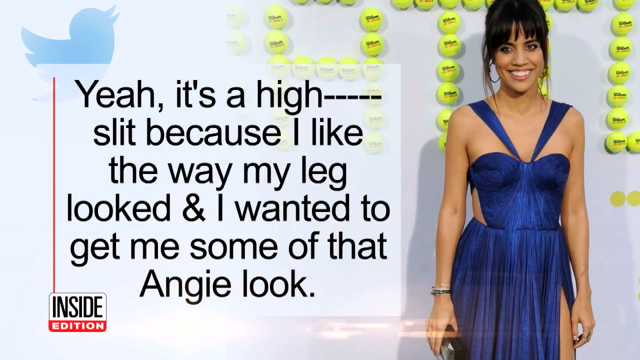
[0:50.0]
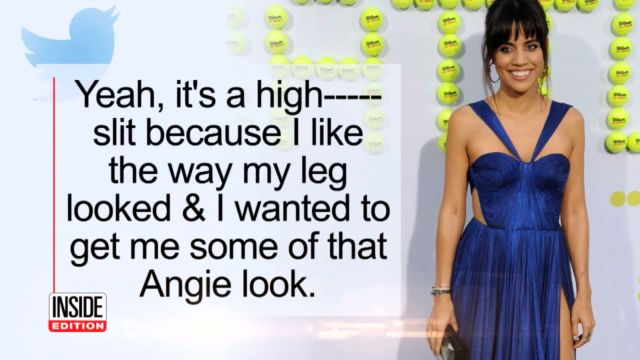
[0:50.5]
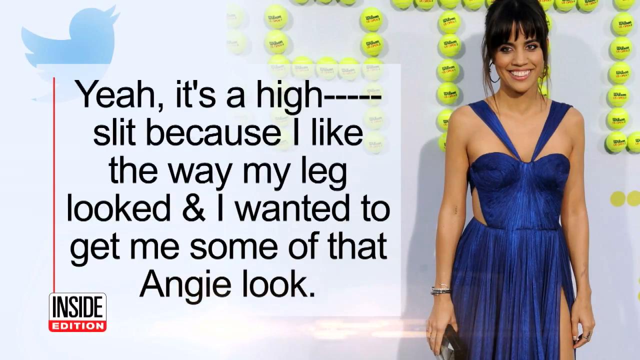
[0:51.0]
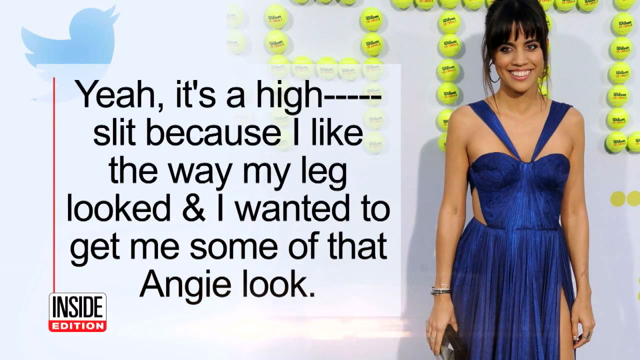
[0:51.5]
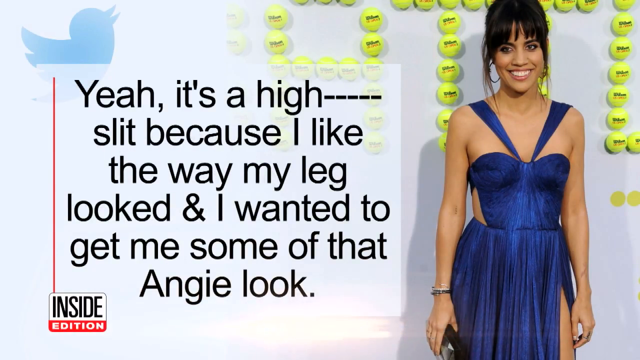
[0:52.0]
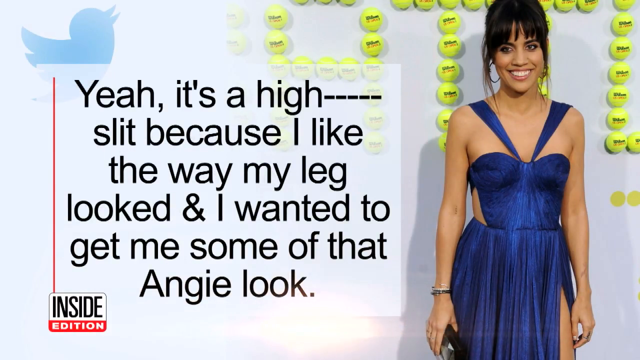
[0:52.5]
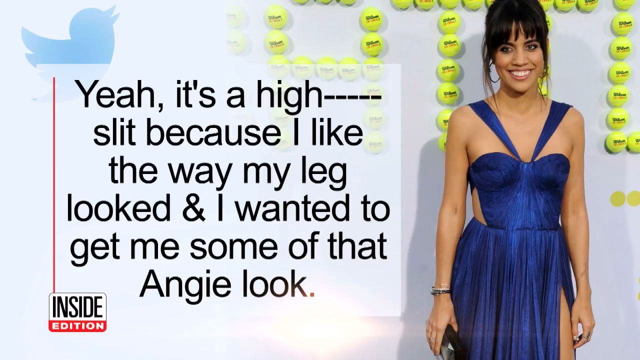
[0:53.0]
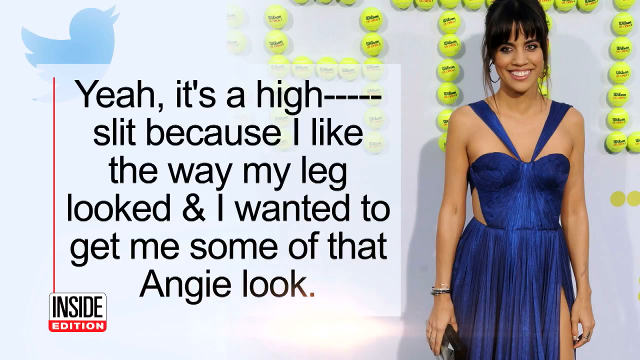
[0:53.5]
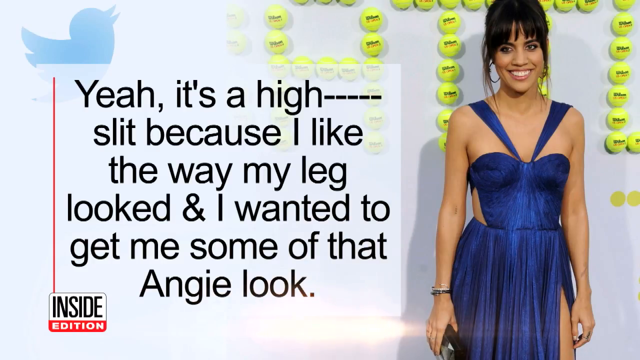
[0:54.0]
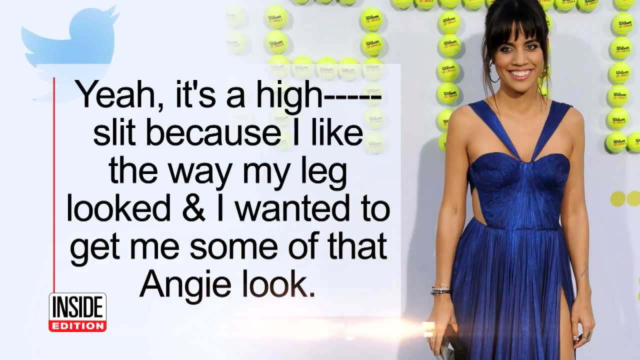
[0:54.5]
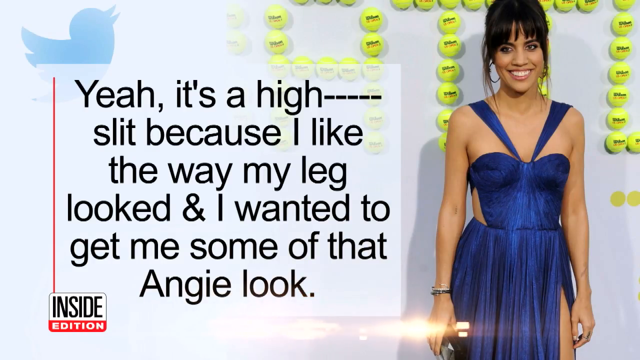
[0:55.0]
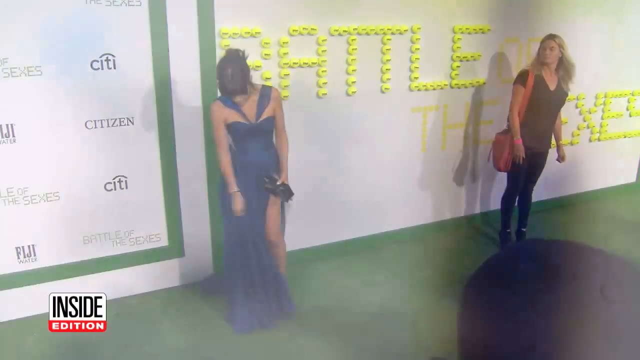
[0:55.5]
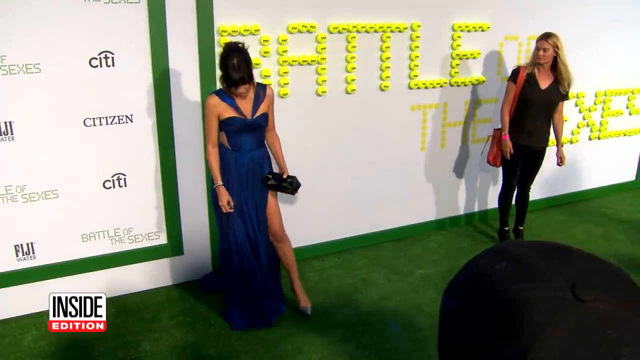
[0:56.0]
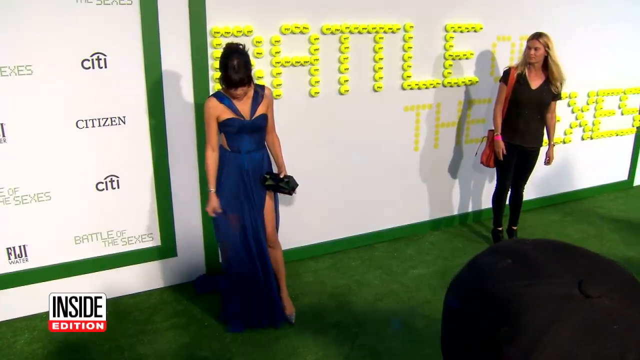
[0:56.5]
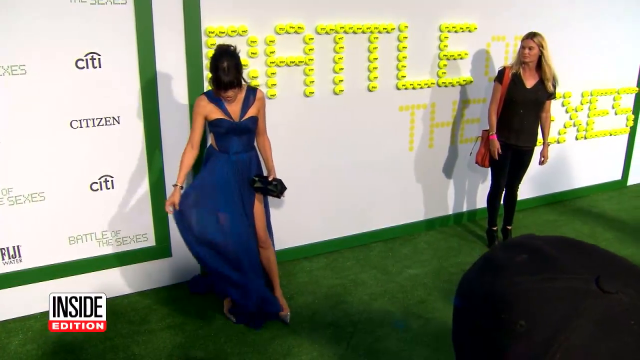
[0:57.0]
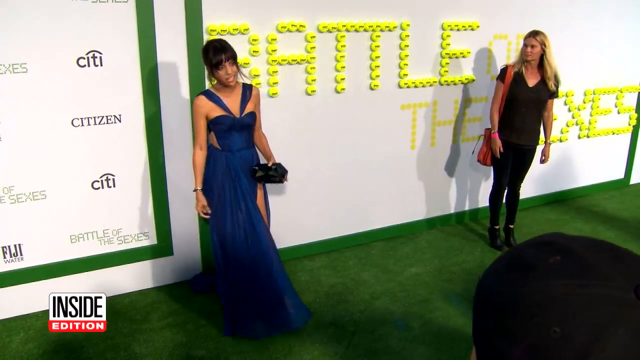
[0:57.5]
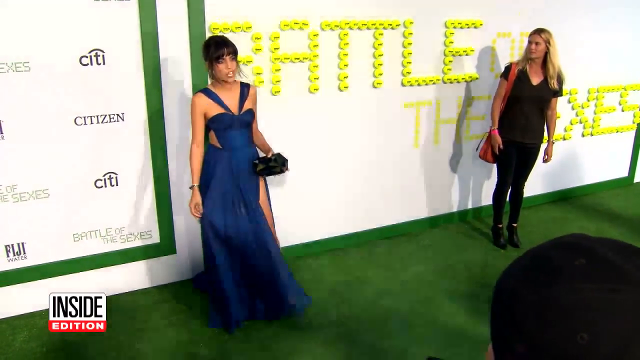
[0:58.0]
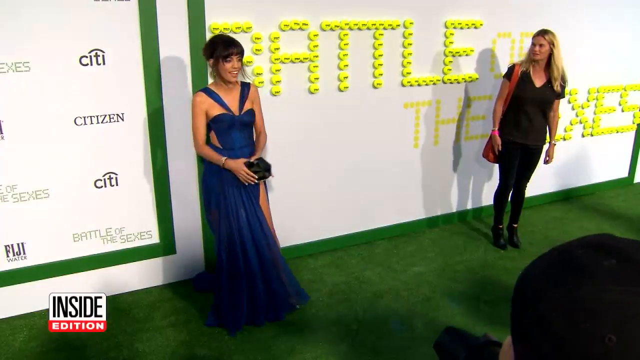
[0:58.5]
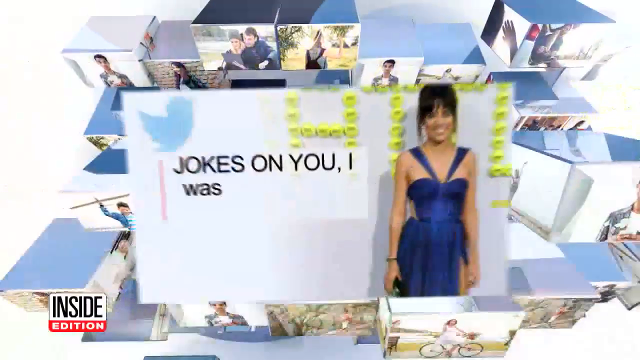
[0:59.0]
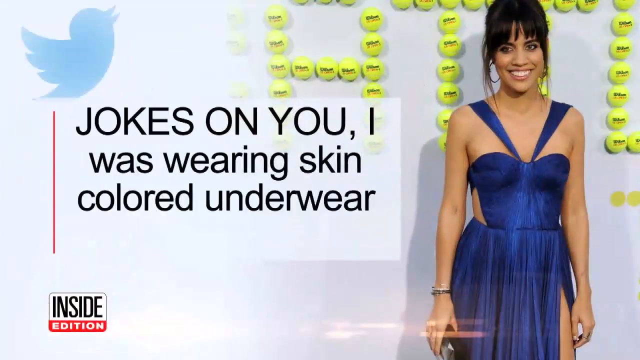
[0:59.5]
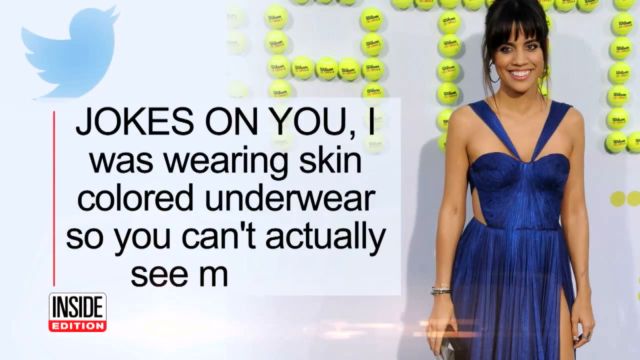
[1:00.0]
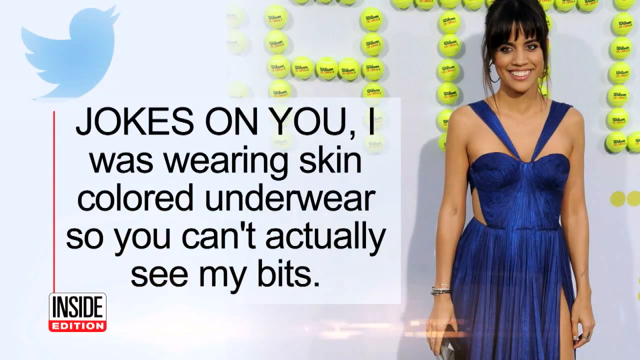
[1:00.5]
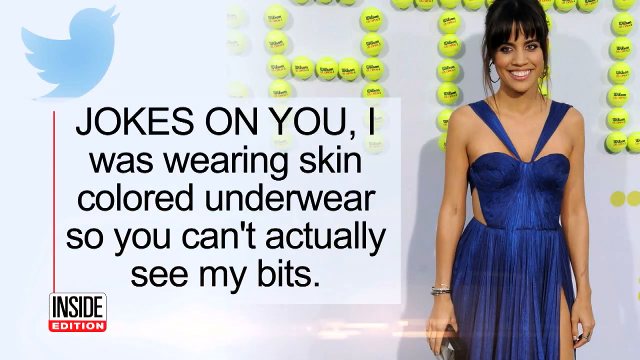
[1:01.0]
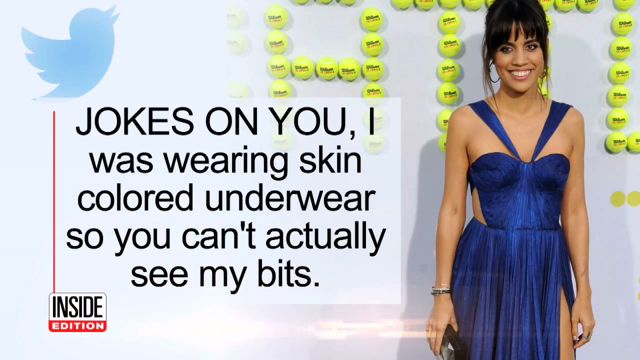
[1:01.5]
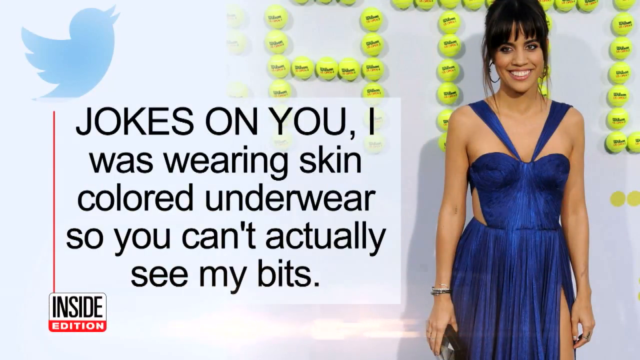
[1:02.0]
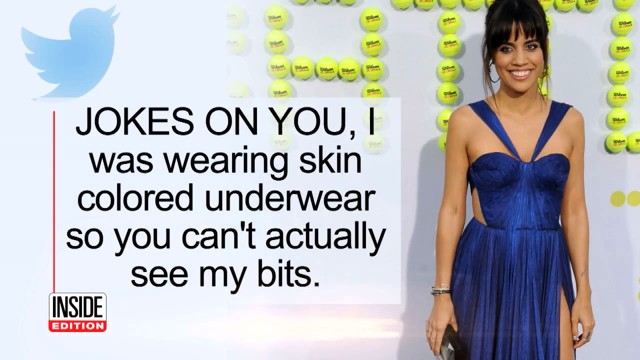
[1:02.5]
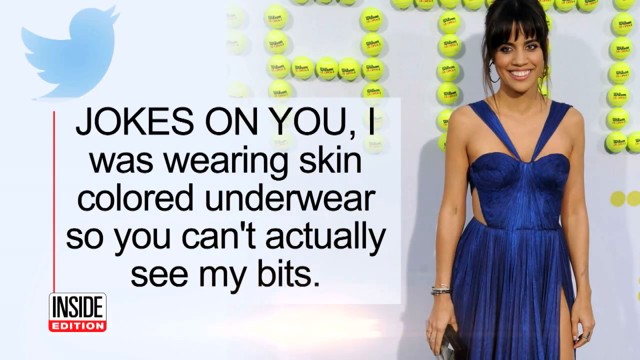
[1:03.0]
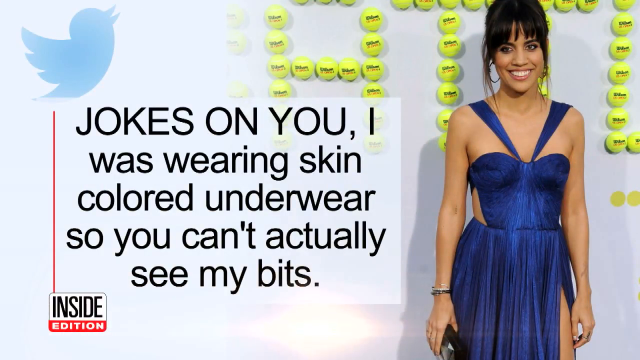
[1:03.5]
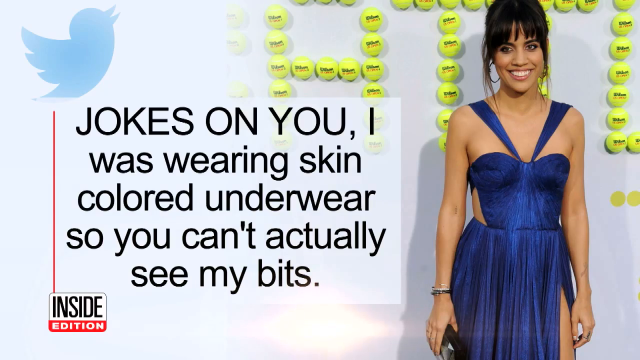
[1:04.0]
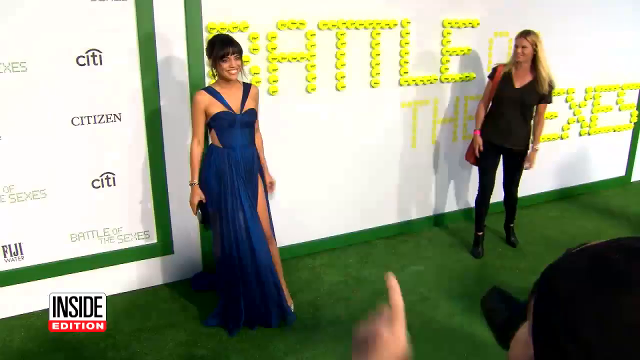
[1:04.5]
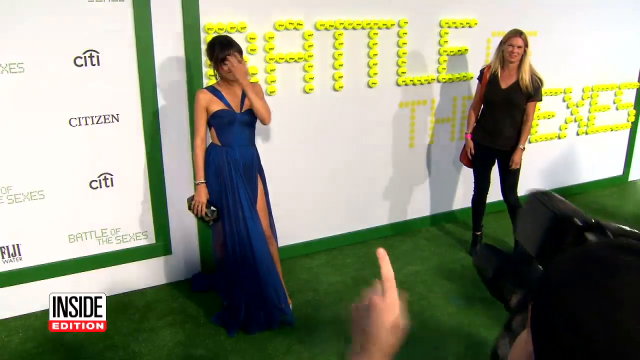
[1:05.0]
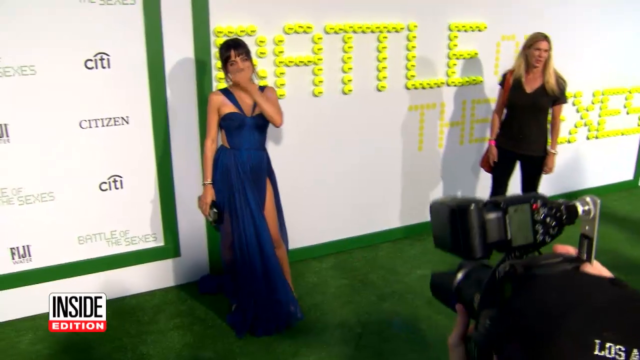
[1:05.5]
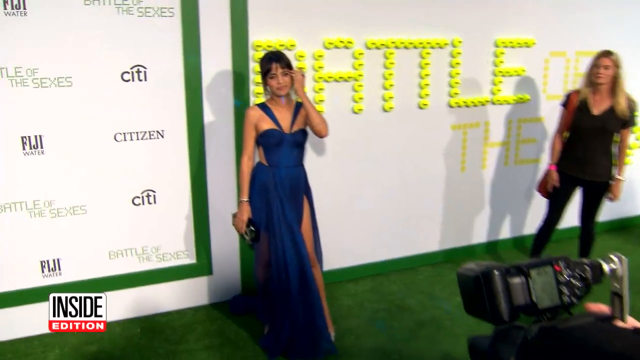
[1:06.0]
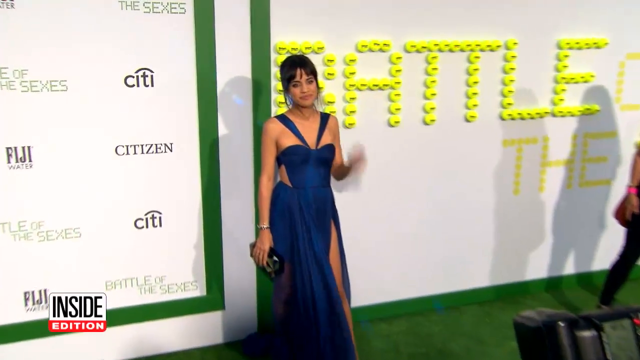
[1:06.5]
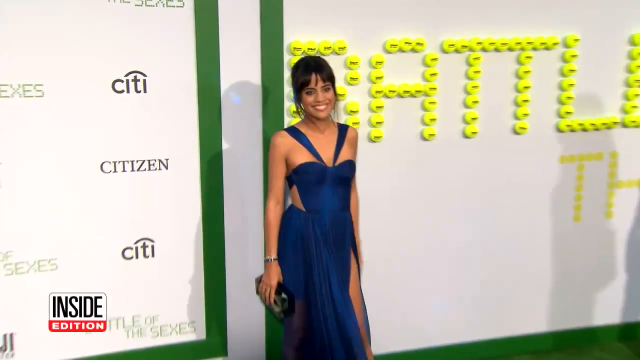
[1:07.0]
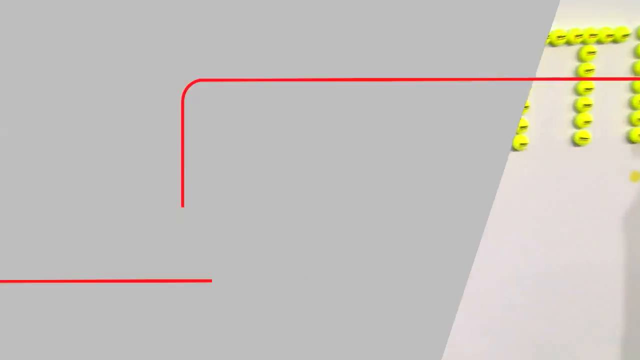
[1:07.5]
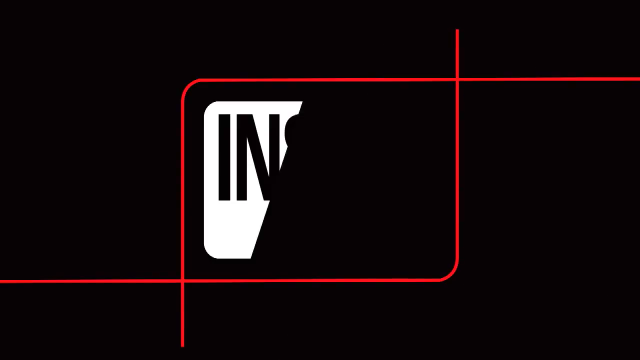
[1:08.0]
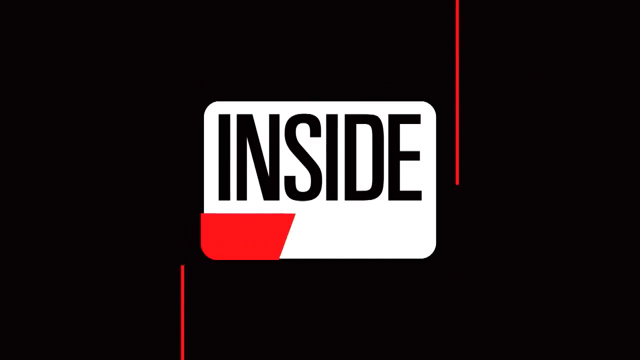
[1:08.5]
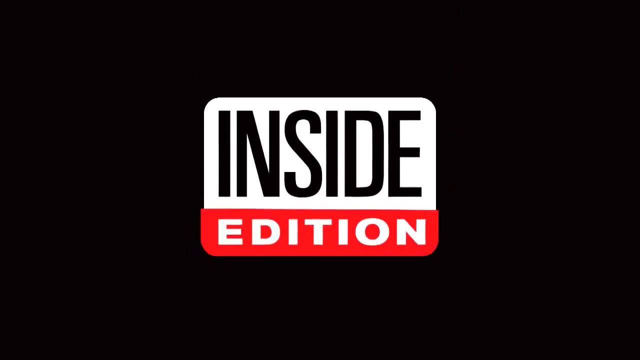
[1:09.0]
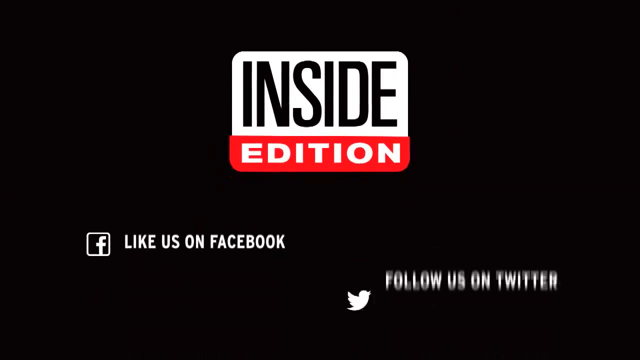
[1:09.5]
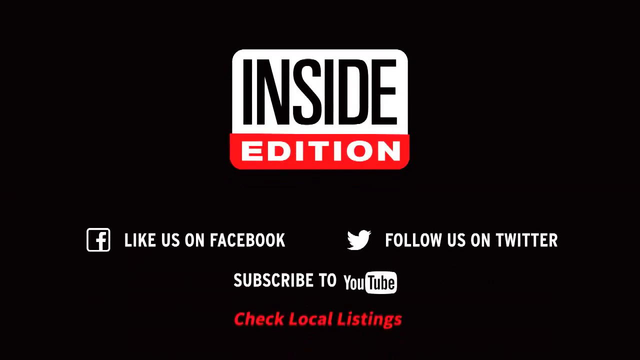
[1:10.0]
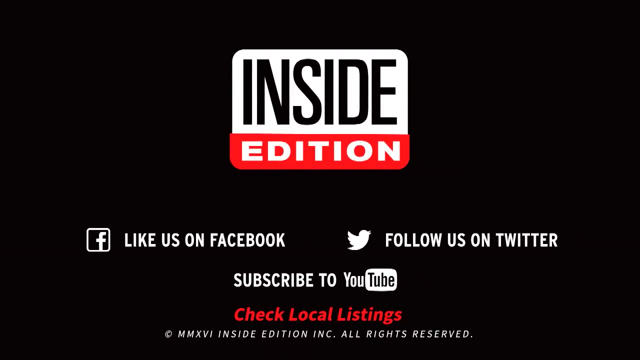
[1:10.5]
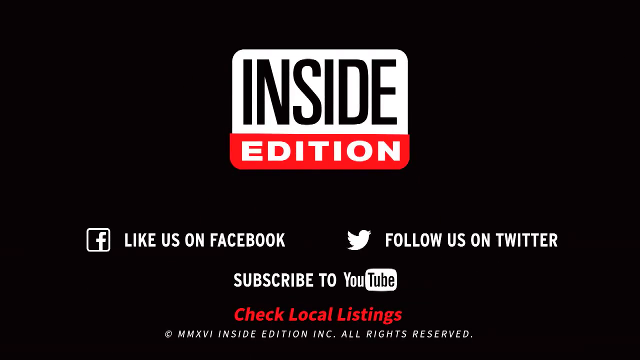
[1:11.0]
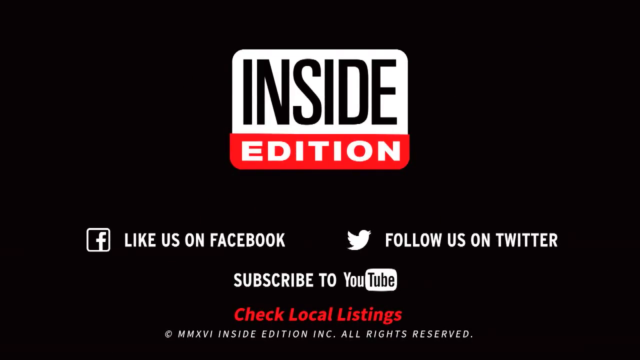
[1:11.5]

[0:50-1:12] The camera zooms in on the woman being photographed. She is still wearing the same dress and is now holding her purse as more tweets come in, one saying "jokes on you, I was wearing skin colored underwear. So you can't actually see my". The other woman is standing, appearing to smile and look aside as the photographer keeps taking pictures. The woman gives a more focused smile as more pictures are taken, and the other woman seems to be smiling too. While taking pictures, the photographer directs the woman on how to pose. She fixes her hair, keeps smiling more boldly, places her hands behind her back and holds the purse tighter, while the other woman continues smiling.